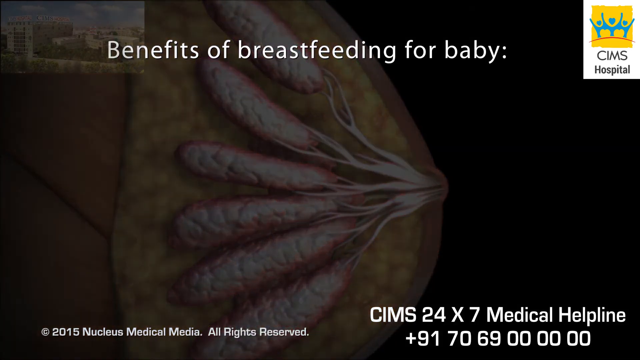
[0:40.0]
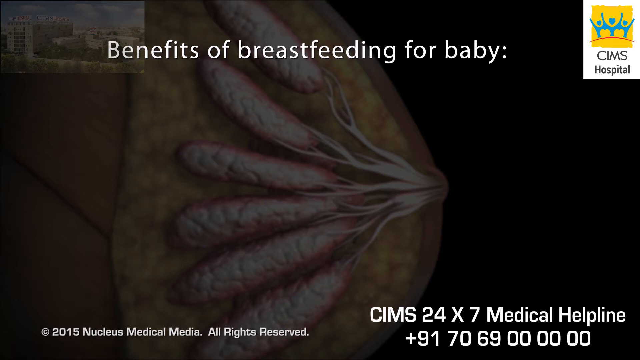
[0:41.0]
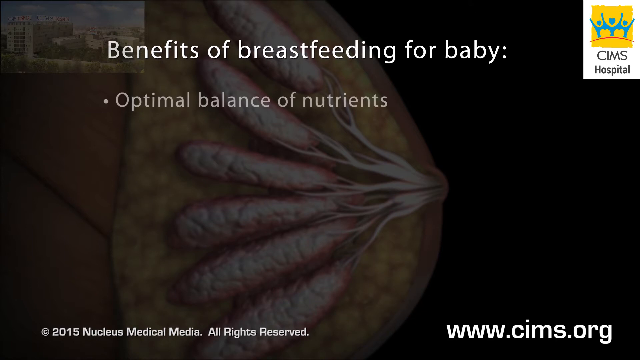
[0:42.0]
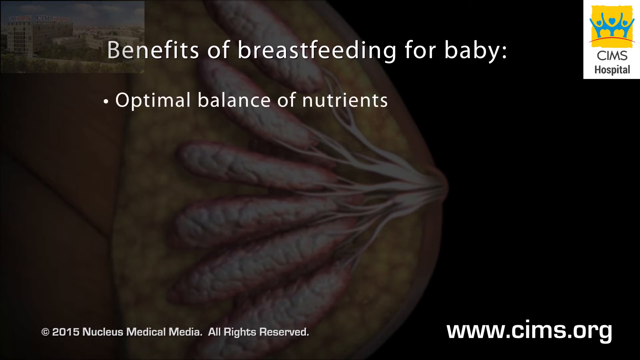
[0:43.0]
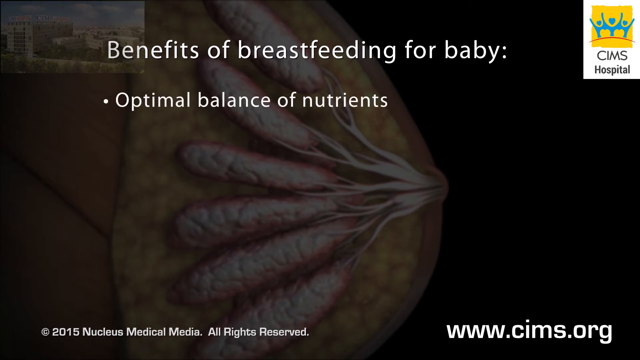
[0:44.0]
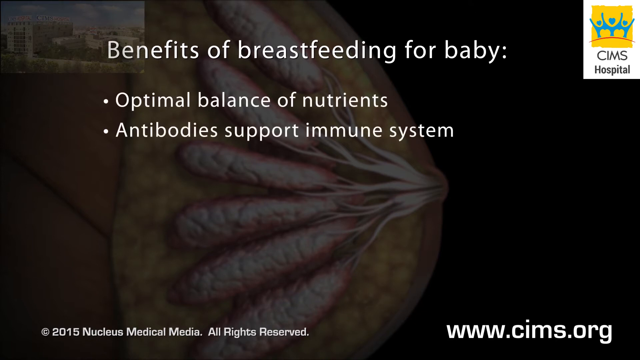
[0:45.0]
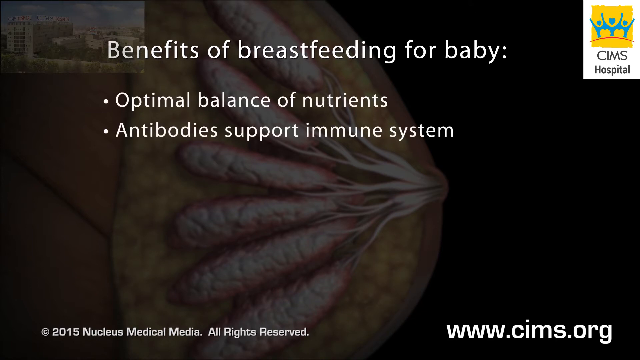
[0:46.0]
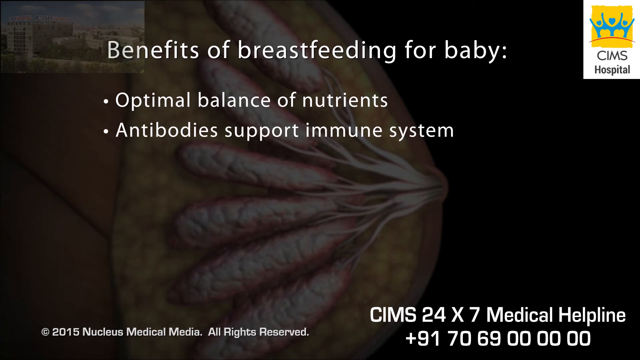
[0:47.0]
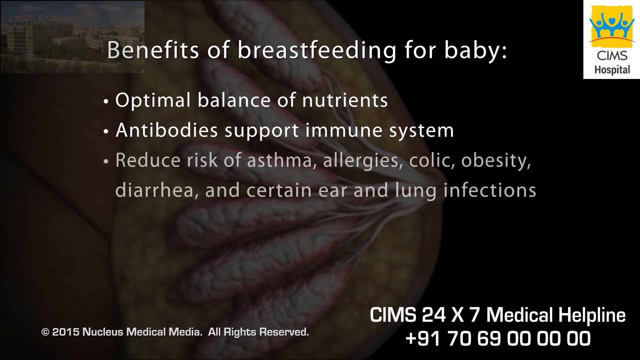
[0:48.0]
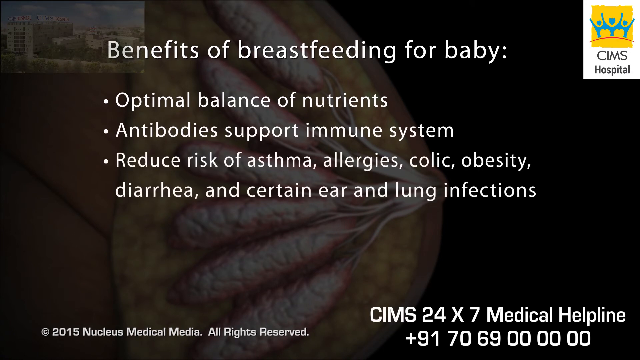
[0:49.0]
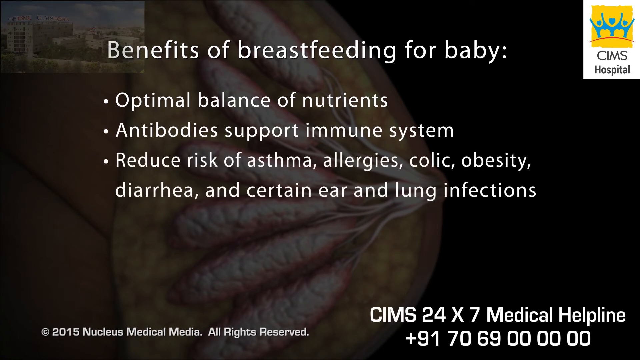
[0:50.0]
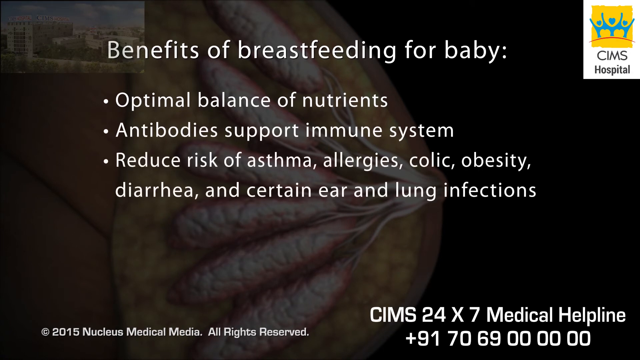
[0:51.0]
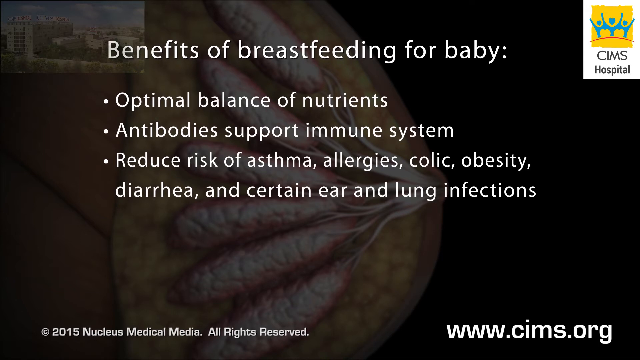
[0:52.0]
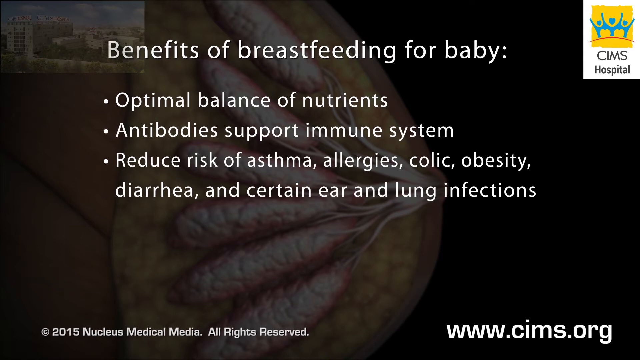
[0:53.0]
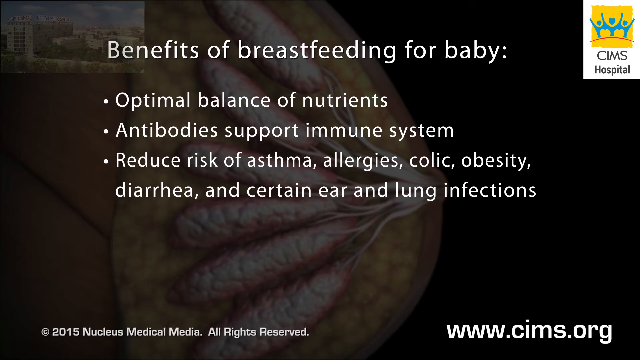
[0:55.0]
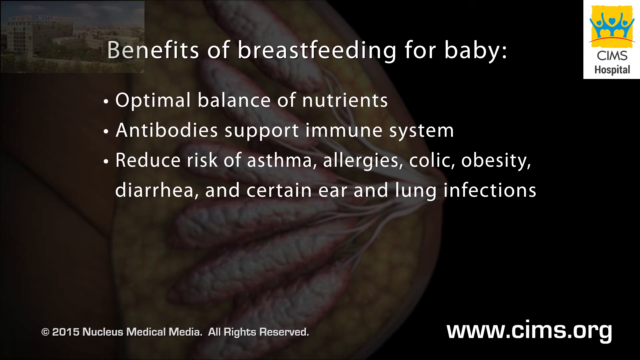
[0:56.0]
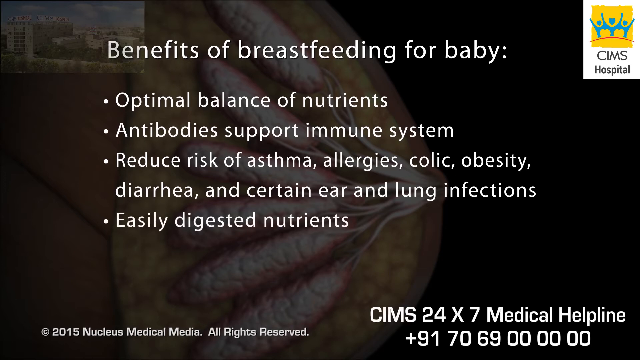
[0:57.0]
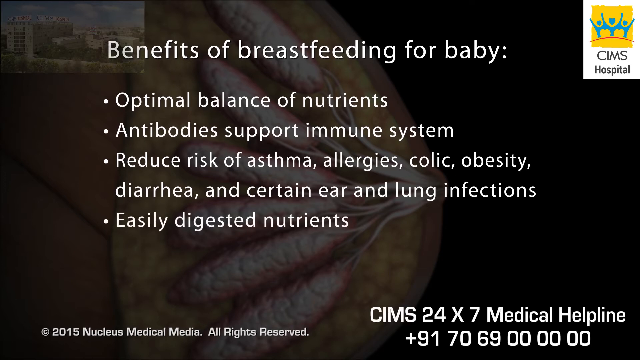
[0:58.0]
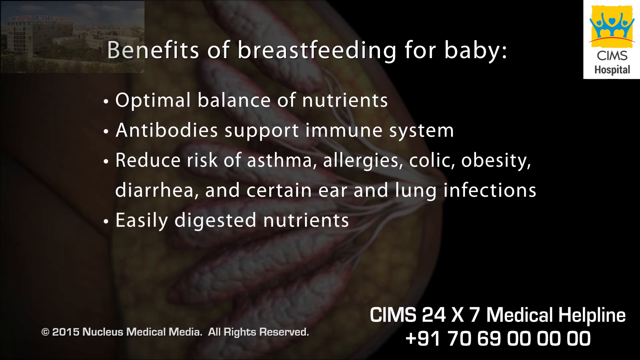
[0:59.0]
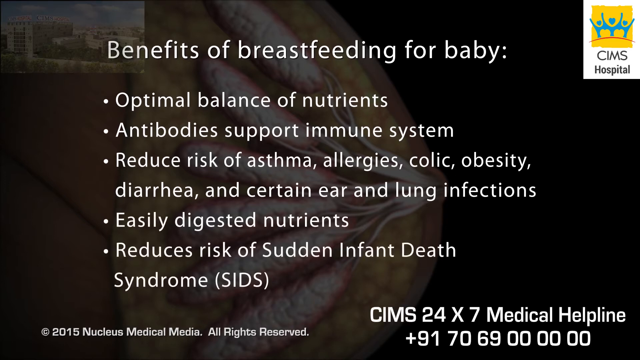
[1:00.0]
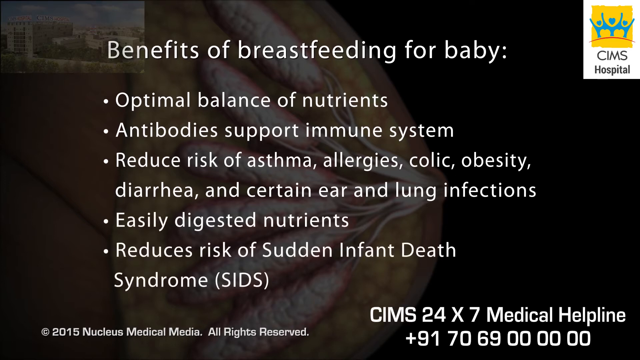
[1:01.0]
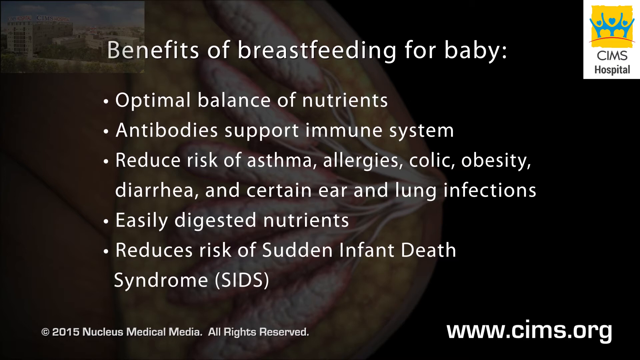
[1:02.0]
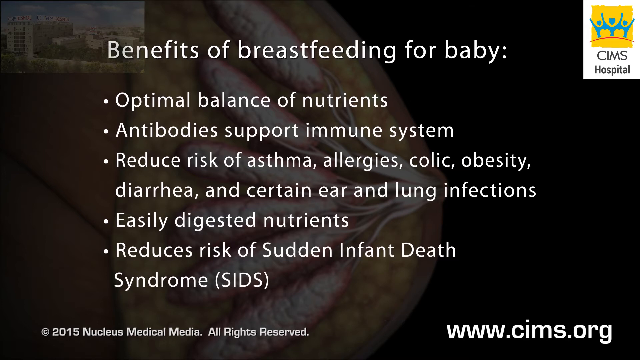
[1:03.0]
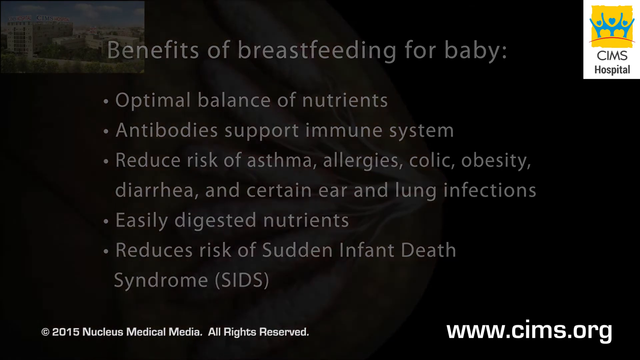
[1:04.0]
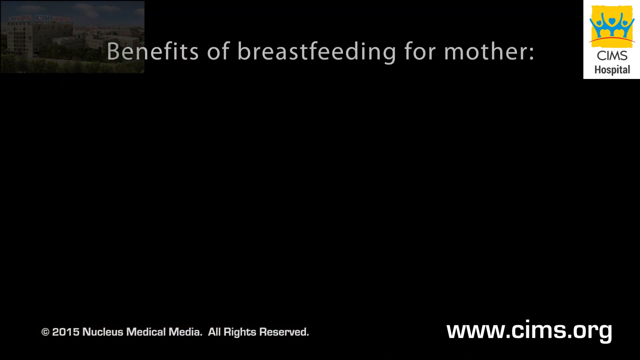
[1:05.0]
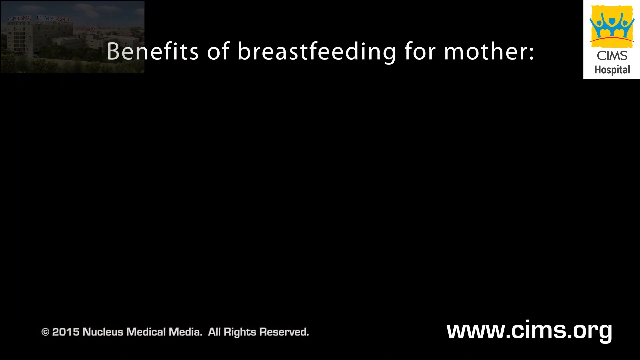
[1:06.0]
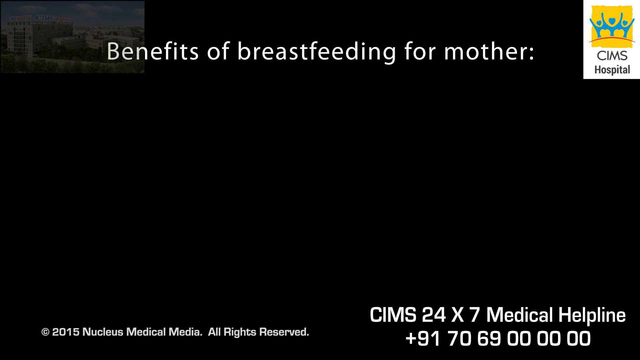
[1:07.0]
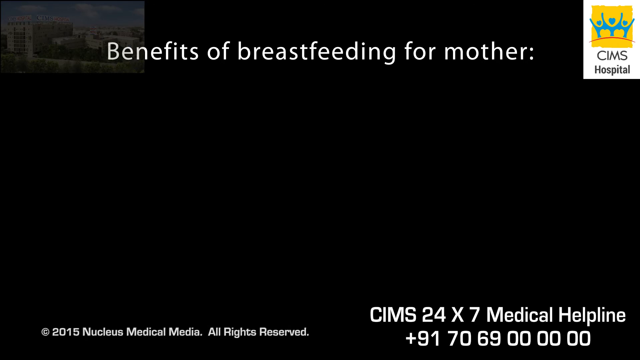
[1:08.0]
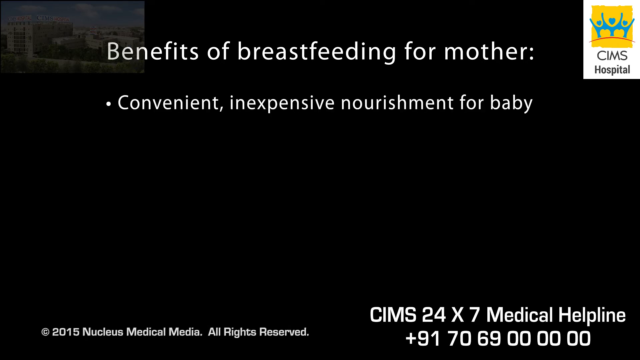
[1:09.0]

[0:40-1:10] The video presents benefits of breastfeeding for the baby: bonding between mother and baby, an optimal balance of nutrients according to CIMS, antibodies supporting a healthy immune system, a reduced risk of lifelong diseases such as asthma and allergies, prevention of colic and obesity, control of diarrhea, help fighting ear and lung infections, better digestion of nutrients, and a reduced risk of Sudden Infant Death Syndrome (SIDS).